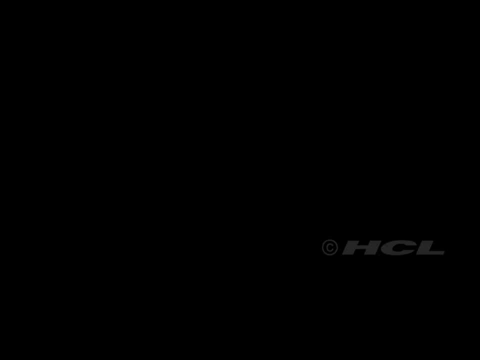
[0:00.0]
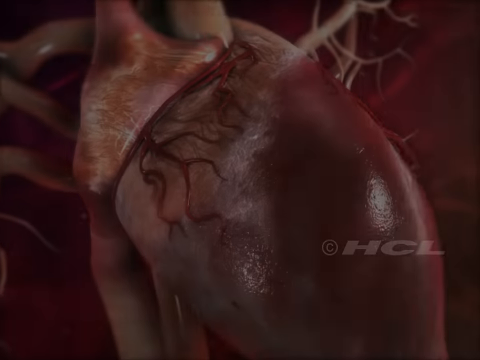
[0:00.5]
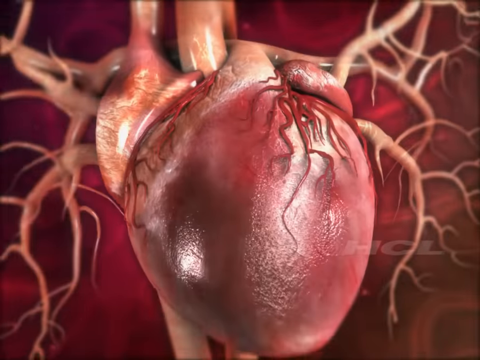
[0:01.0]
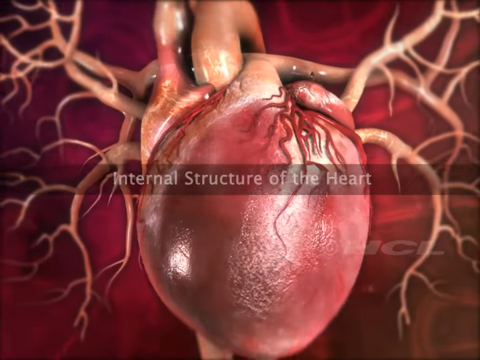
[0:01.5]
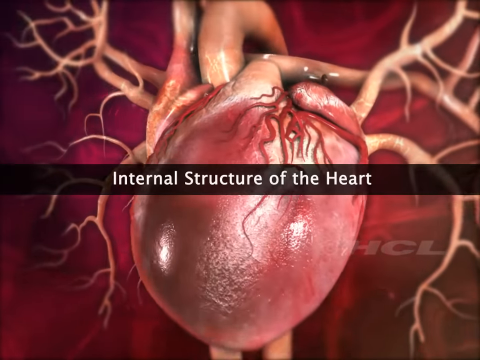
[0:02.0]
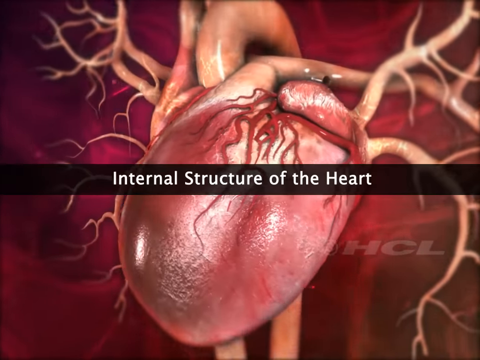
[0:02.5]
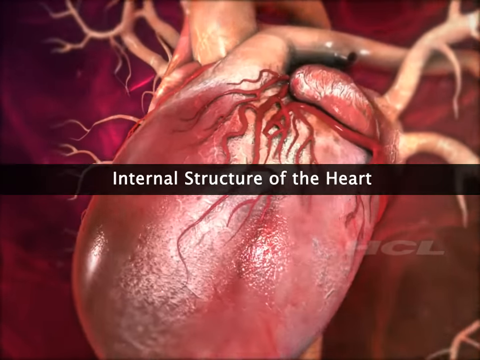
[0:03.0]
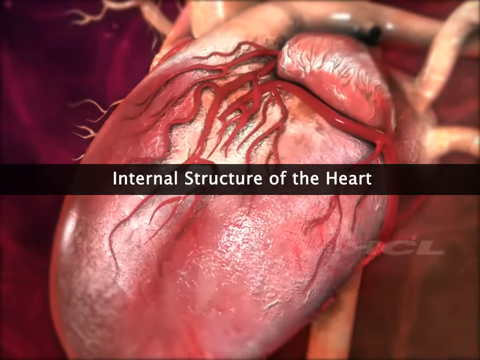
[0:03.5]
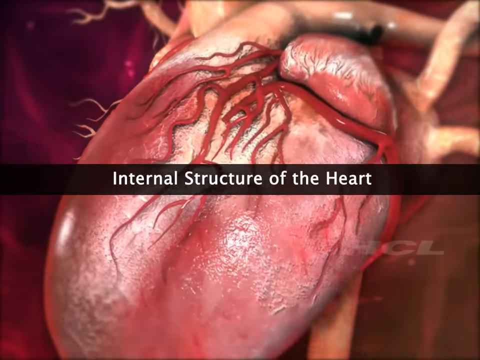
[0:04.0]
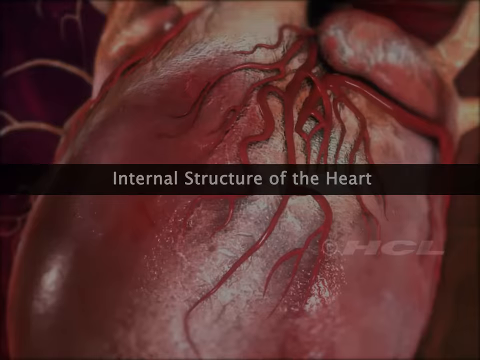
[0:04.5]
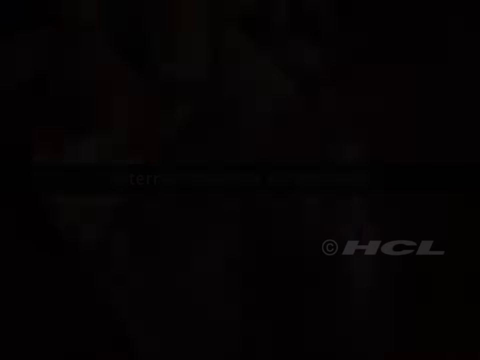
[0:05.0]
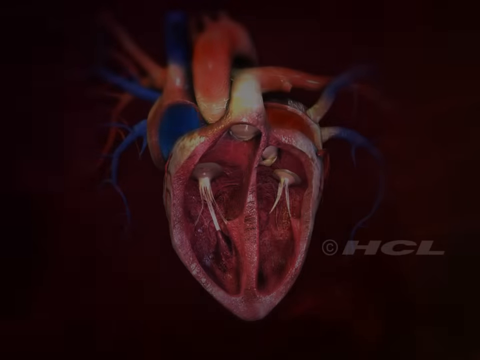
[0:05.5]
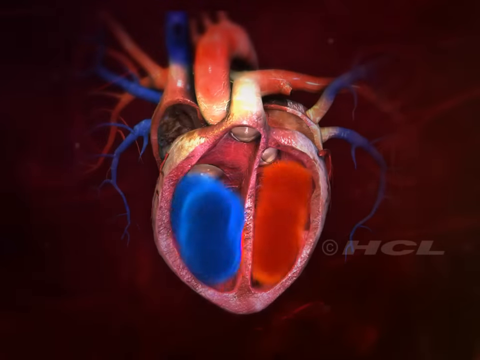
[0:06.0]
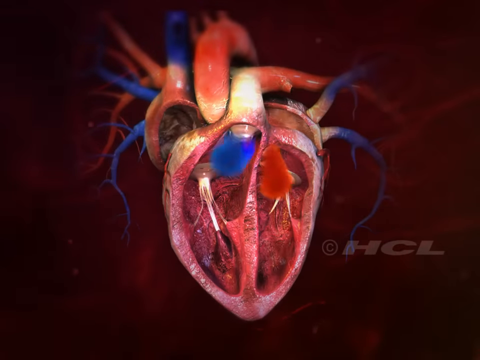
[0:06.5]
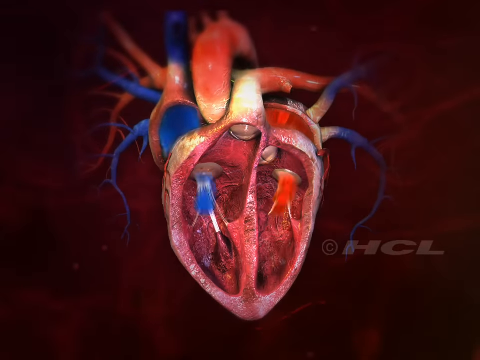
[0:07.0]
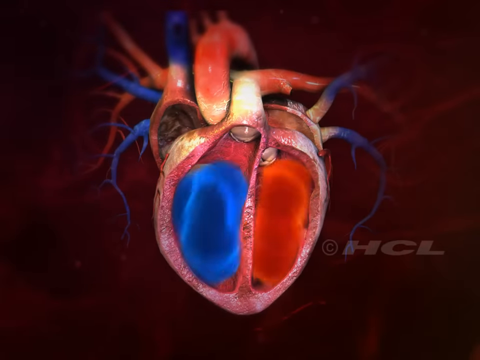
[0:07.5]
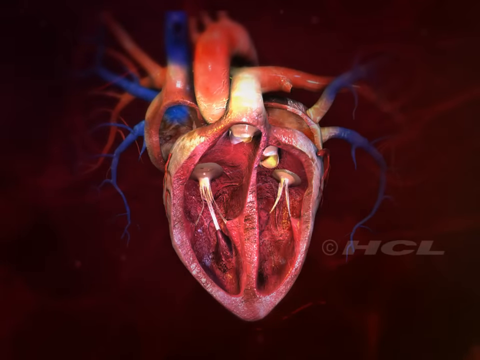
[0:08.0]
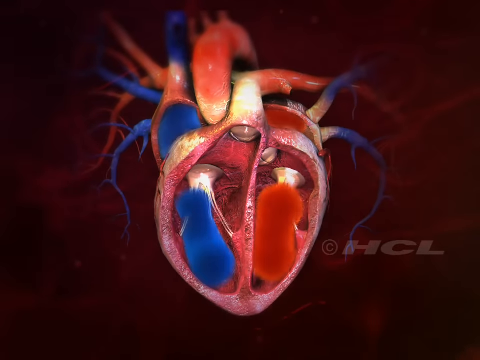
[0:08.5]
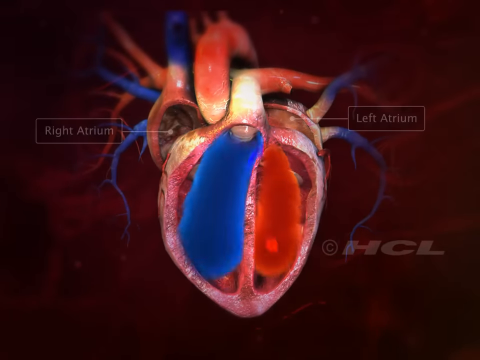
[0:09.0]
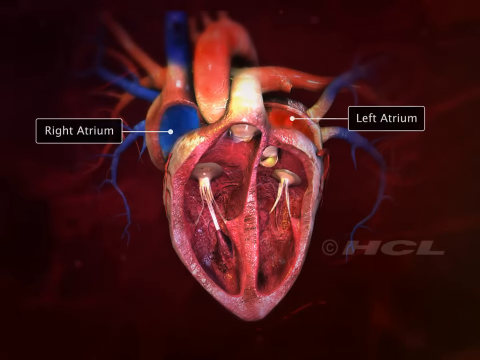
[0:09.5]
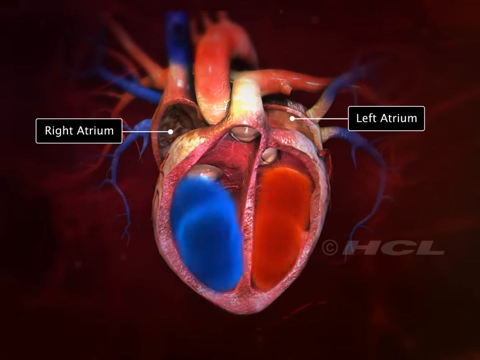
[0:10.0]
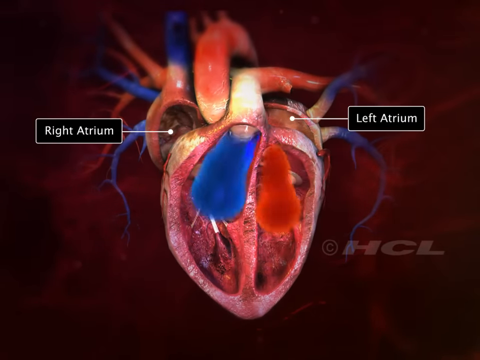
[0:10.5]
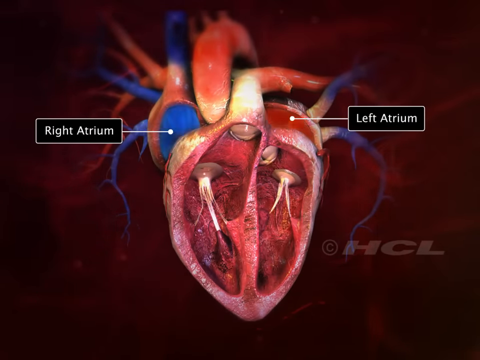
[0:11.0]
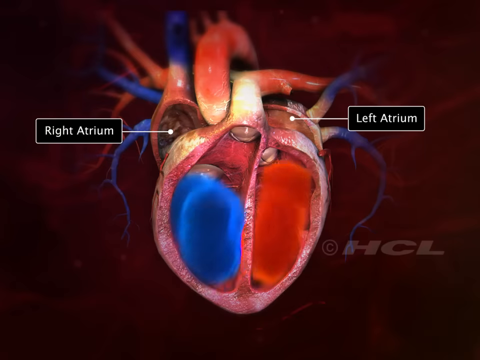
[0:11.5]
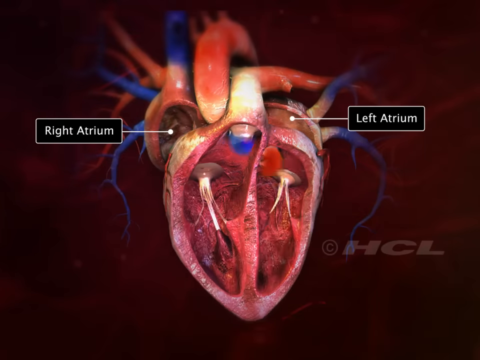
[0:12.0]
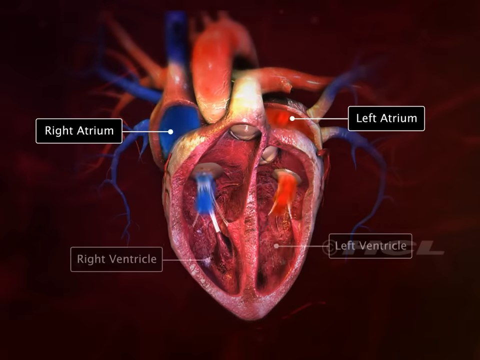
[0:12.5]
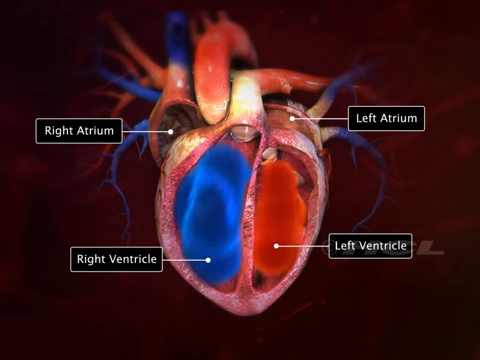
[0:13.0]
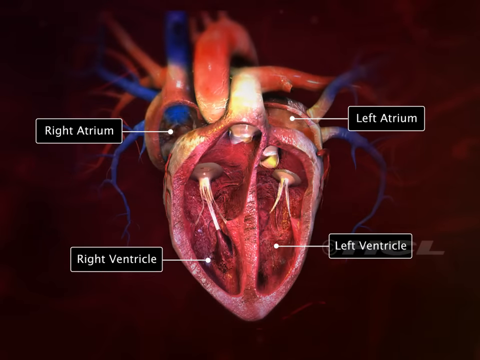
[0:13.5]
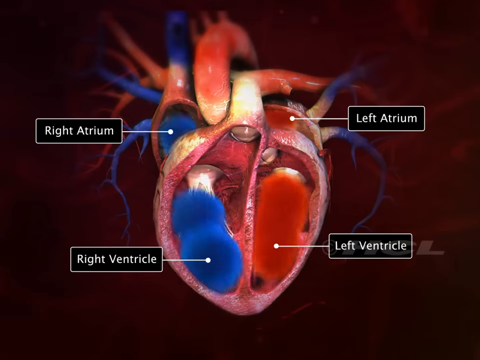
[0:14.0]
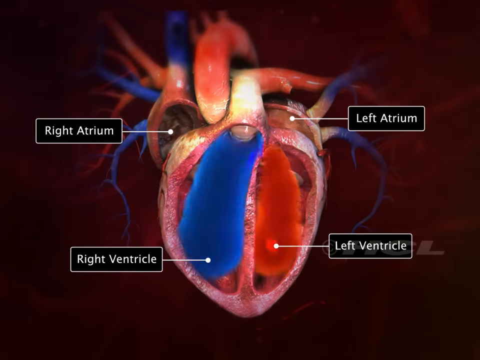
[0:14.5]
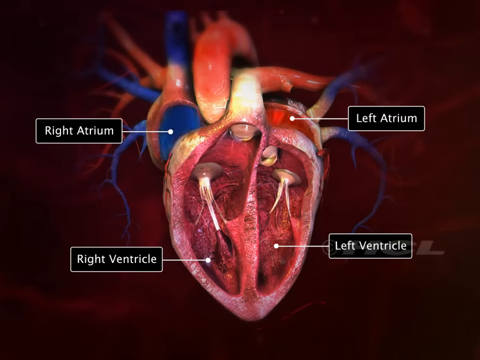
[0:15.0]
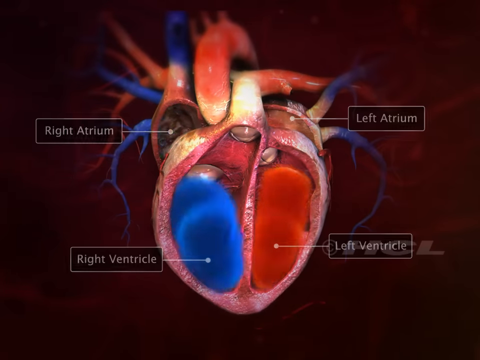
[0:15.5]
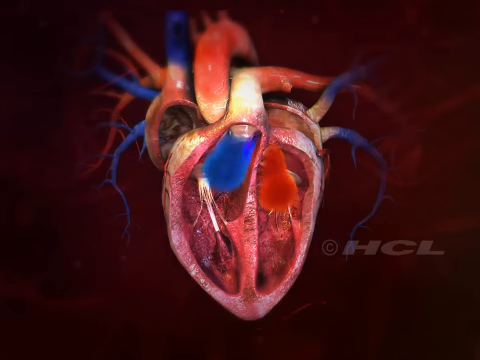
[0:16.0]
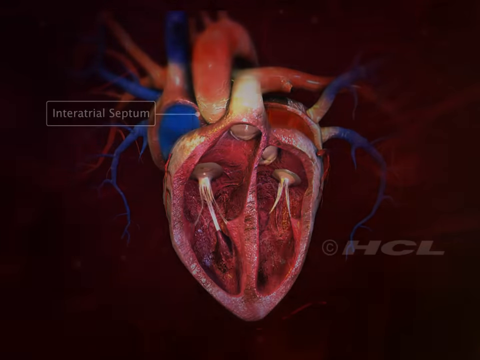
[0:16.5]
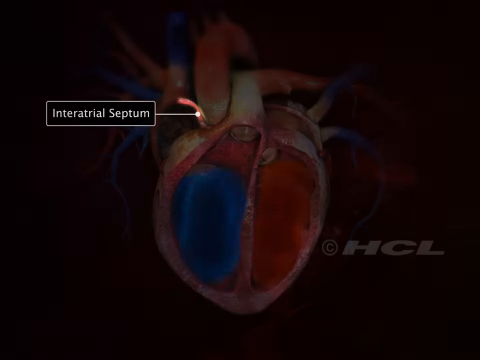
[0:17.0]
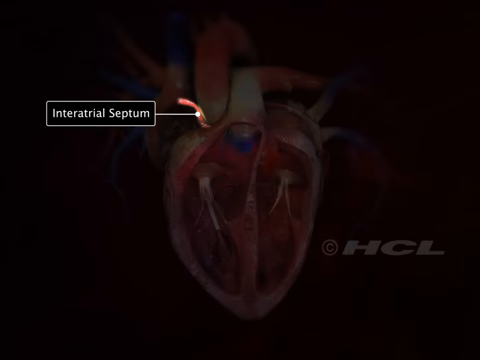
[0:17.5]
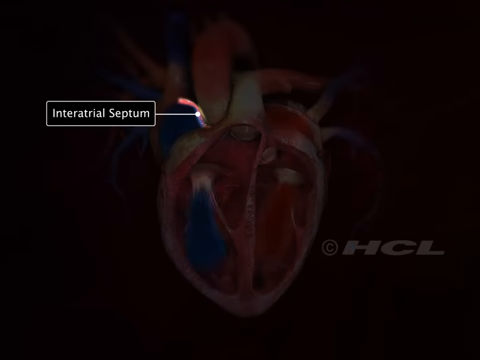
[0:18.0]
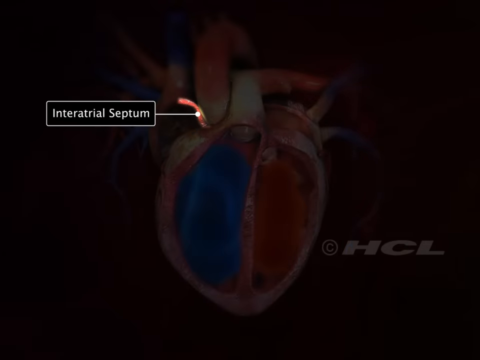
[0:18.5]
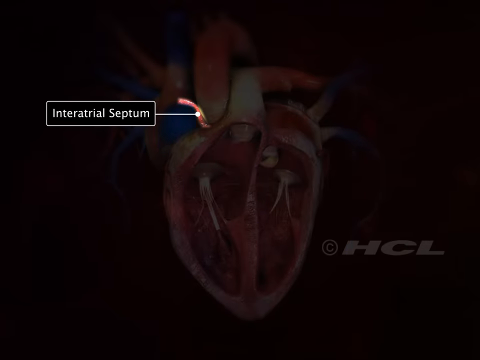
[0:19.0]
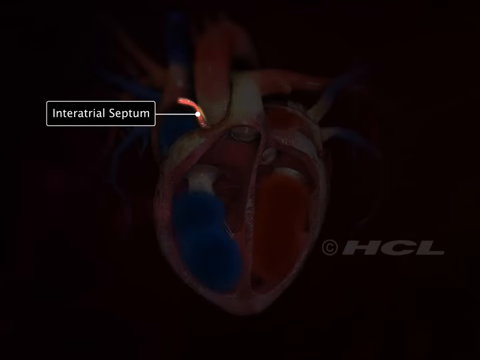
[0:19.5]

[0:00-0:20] The video opens on a dark screen, with a very faint, transparent "HCL" on the right side and a copyright symbol in front of it. A 3D image of a heart appears and the camera zooms around it. Text appears reading "internal structure of the heart." The heart beats; it has a lot of veins inside it and a lot of red. The scene shifts to the heart cut open, showing the inside: blue liquid on the left side and red liquid on the right side. The liquid is sucked into some tubes, more liquid is shot back into that area, and it is sucked in and pushed out over and over. Text appears reading "right atrium" and "left atrium," with lines and dots connecting to show where each atrium is. The diagram shows how the human heart pumps in and out and where the different liquids come from. The scene then goes dark and one part of the heart lights up, with a line connected to a dot and a rectangle reading "interatrial septum," while the heart continues to beat. The whole sequence is a 3D model of the inside of a human heart.